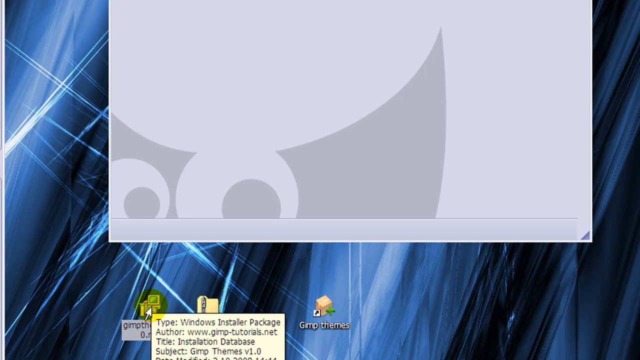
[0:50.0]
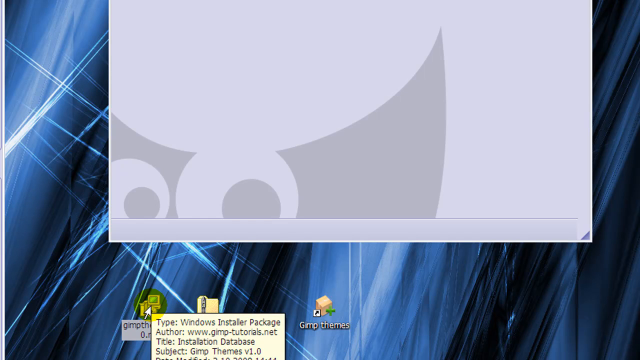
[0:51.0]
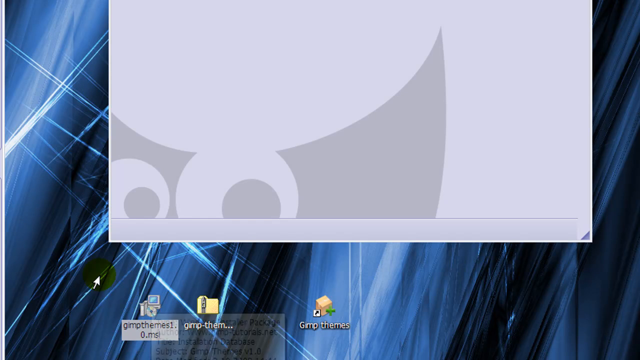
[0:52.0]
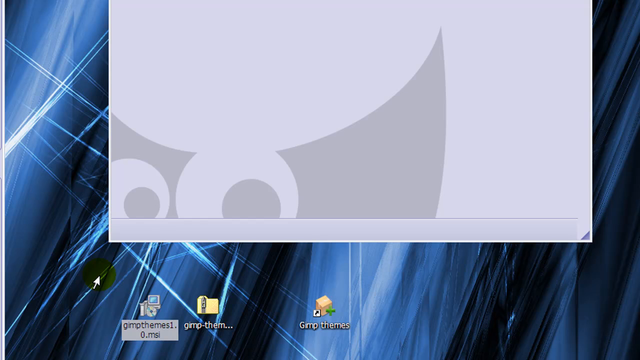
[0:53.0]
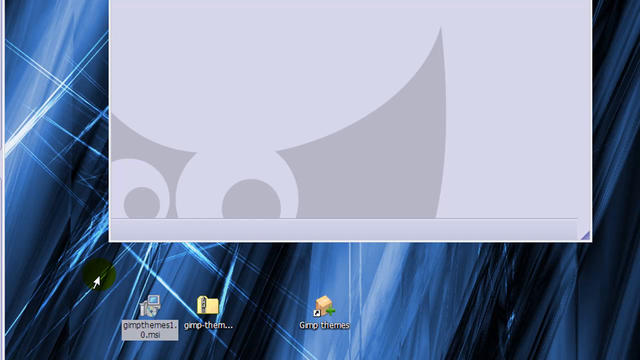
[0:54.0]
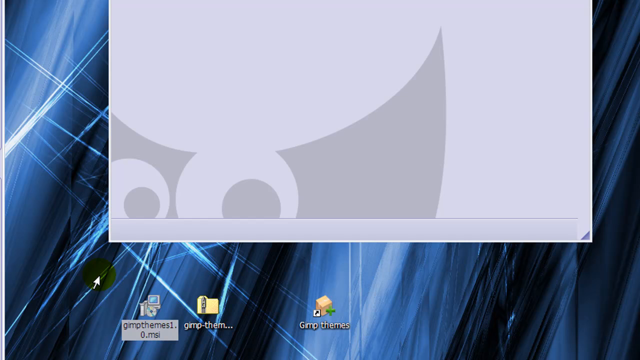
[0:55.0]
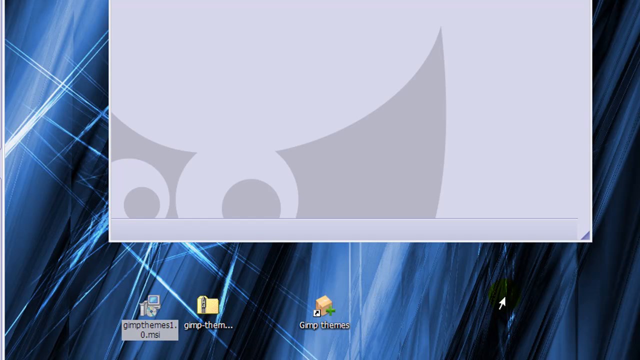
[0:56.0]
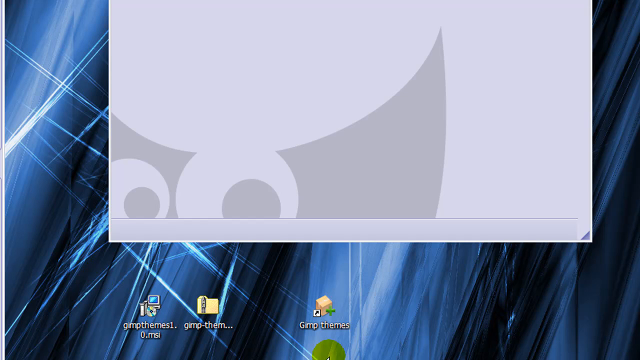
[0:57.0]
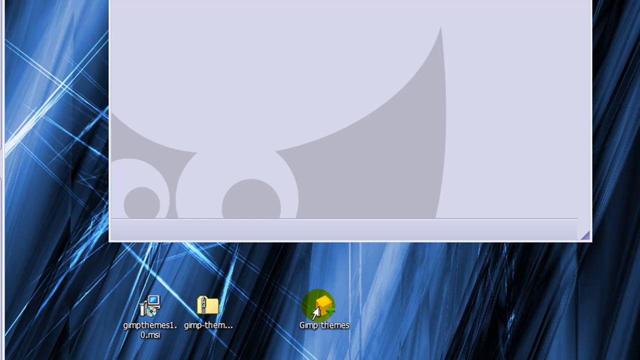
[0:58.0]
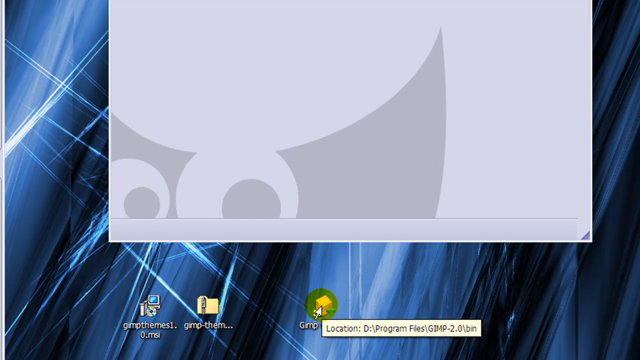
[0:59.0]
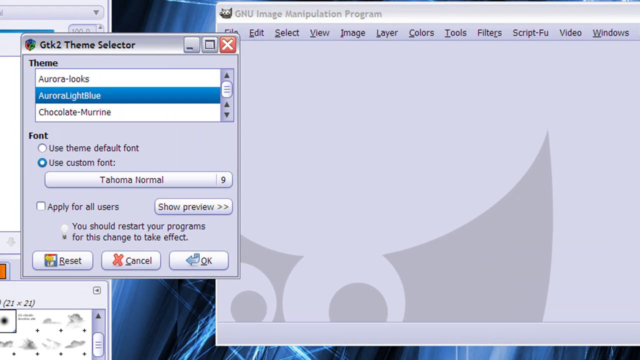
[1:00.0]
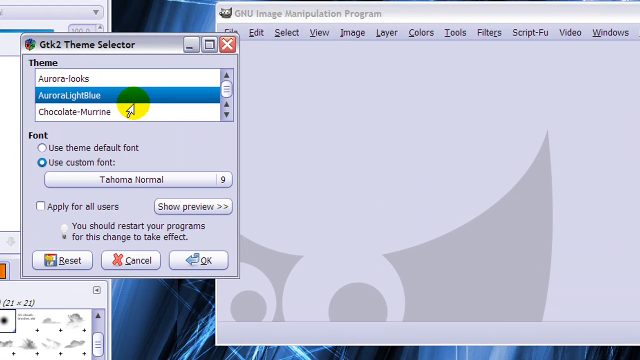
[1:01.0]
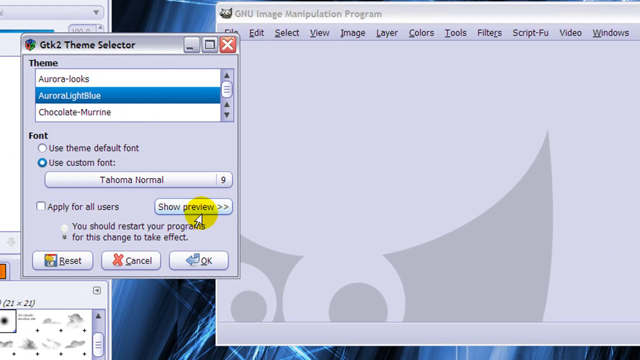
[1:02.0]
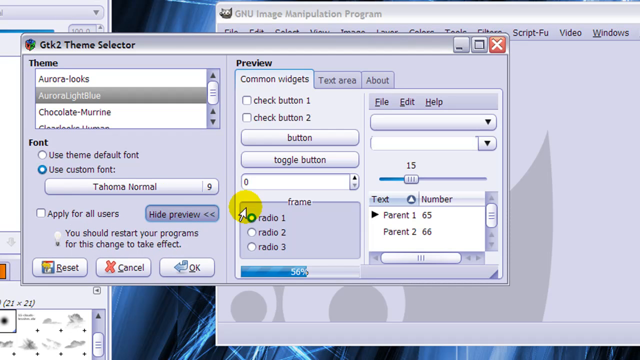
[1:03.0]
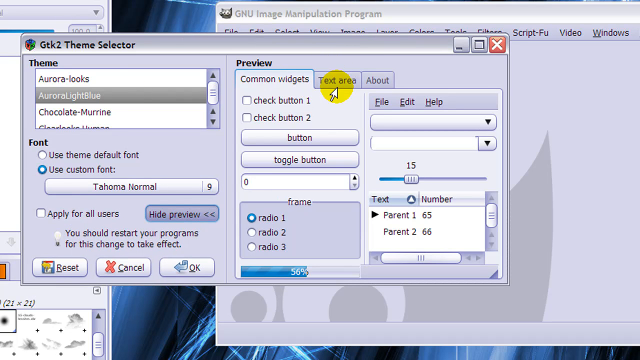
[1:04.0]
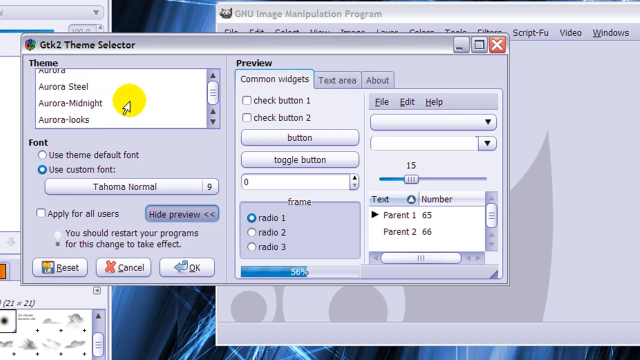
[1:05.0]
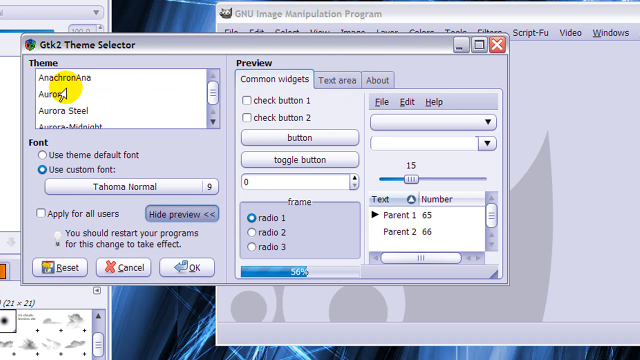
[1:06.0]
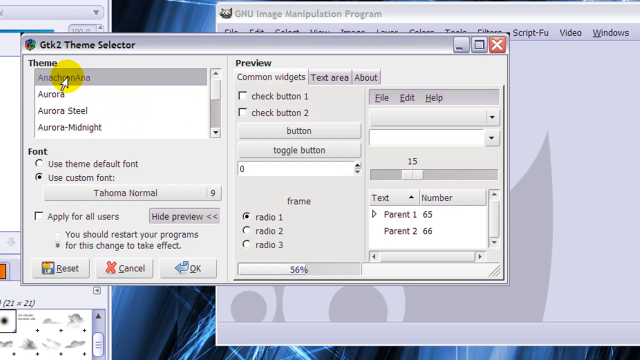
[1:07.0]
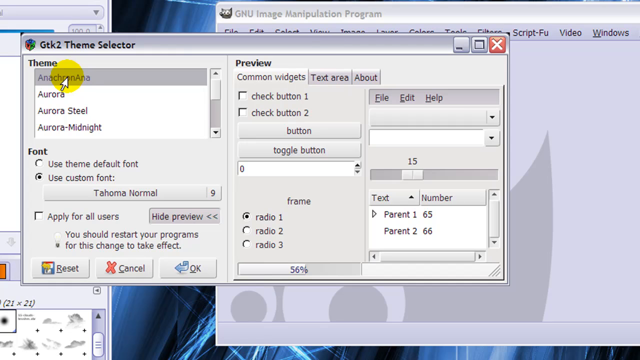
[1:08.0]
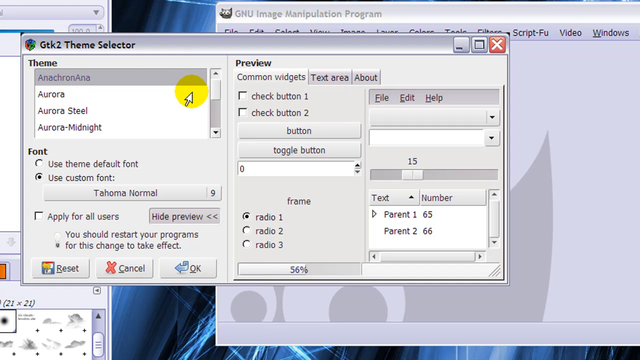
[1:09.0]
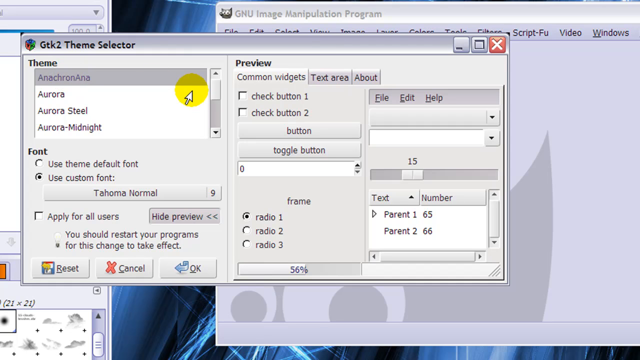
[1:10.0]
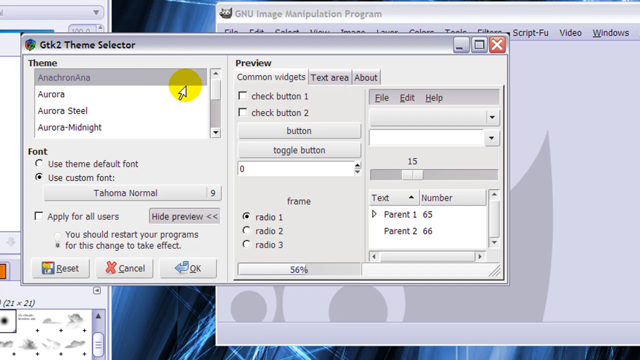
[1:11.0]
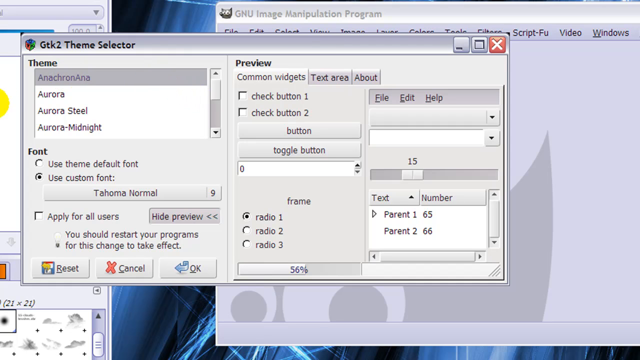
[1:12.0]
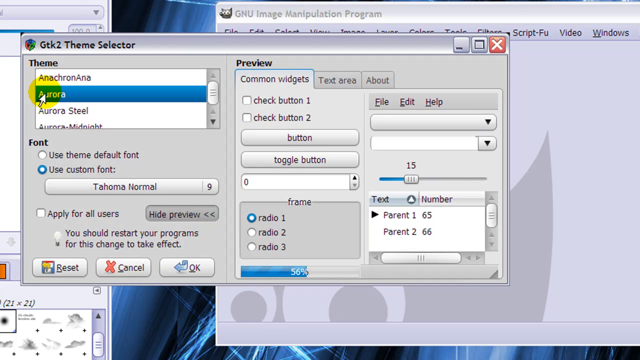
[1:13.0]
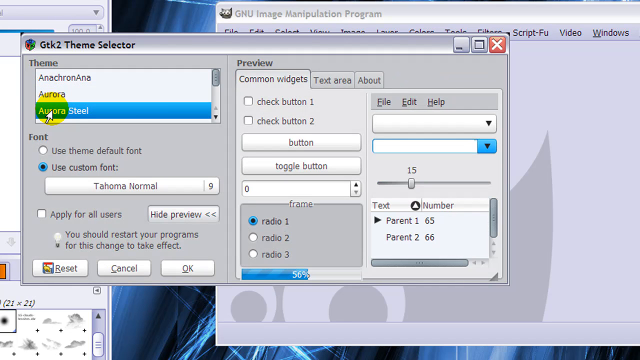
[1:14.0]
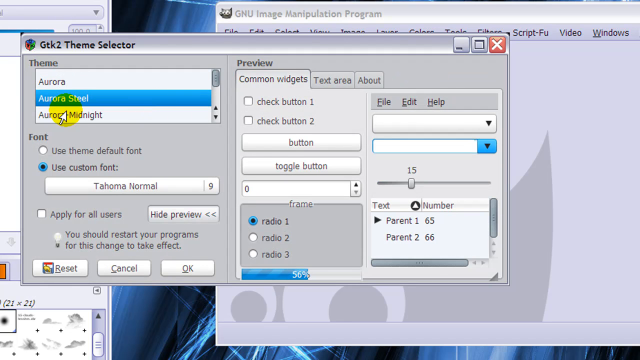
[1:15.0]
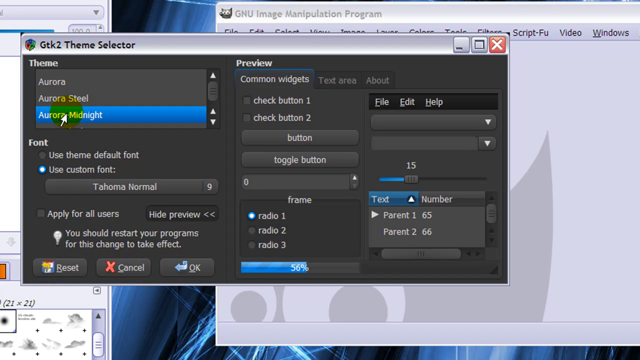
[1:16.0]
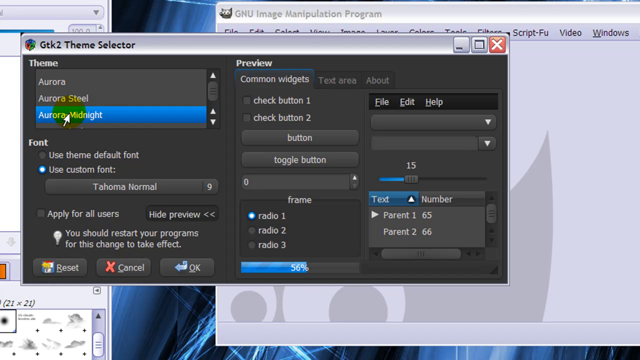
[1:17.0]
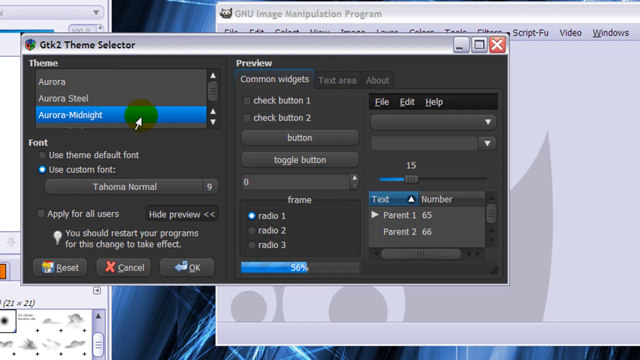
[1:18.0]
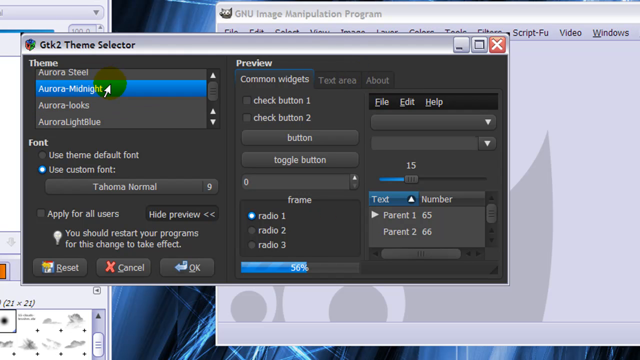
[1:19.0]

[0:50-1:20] The user is recording their screen while interacting with an executable file downloaded from www.gimp-tutorials.net. The mouse cursor is over it, with a yellow circle following the cursor. The user clicks the executable file, moves the cursor away and unclicks from the file. They then double-click a different file called gtk2-theme-selector, which opens a window with text at the top reading "gtk2-theme-selector". The window has a drop-down menu as well as various radio buttons and interaction buttons. Clicking a show preview button opens a new set of options to the right, with tabs reading "Common Widgets", "Text Area" and "About"; the Common Widgets tab is selected. The user mouses over the text area, then moves left to the original window, which has a long list of themes in a white box with a scroll-down menu. Clicking a theme named anacronana turns the window from blue to gray. Selecting a theme called Aurora keeps the window gray but makes it more 3D and pronounced.